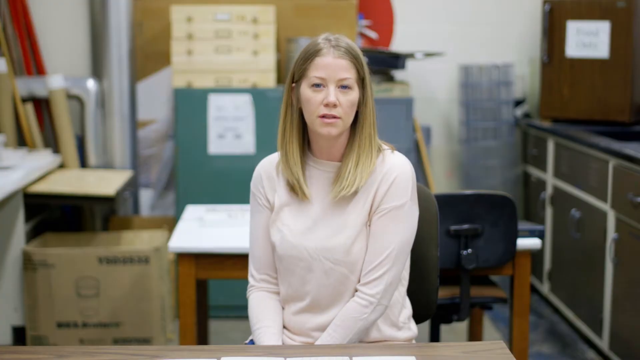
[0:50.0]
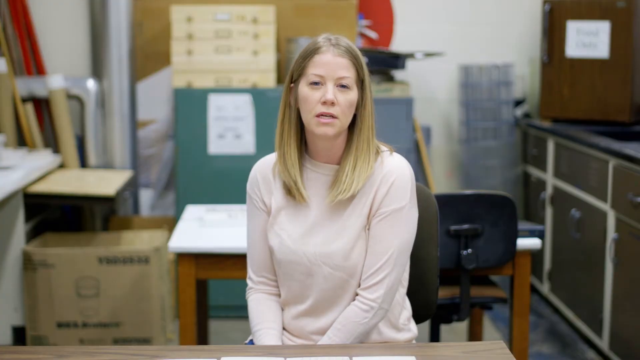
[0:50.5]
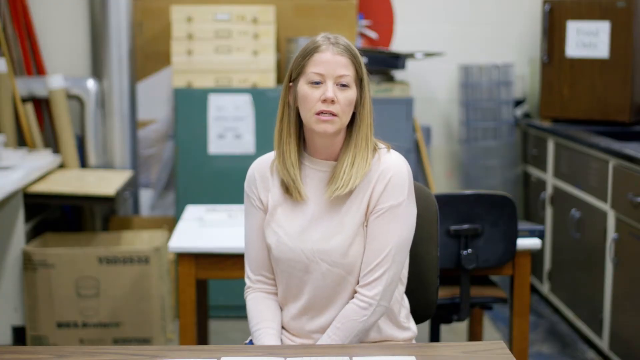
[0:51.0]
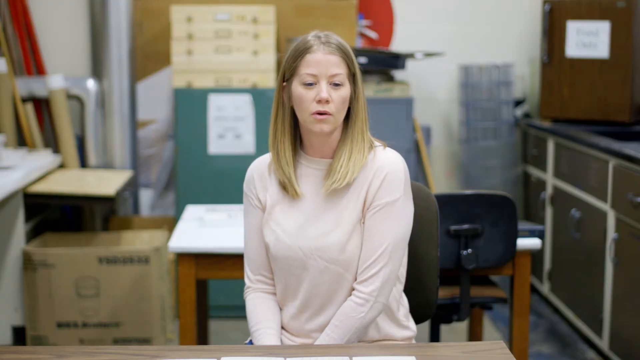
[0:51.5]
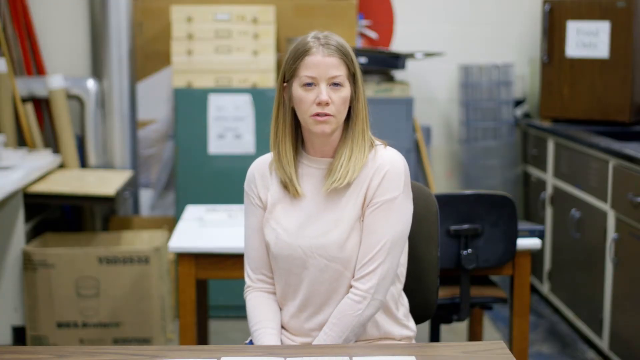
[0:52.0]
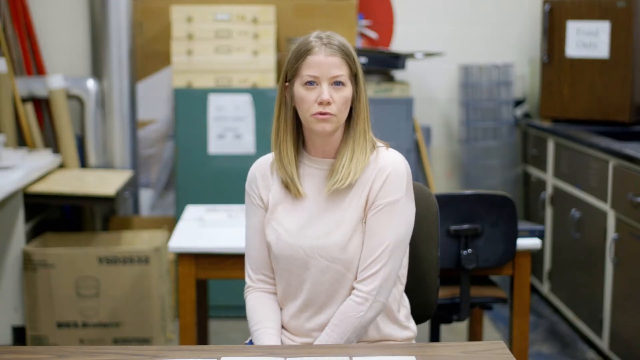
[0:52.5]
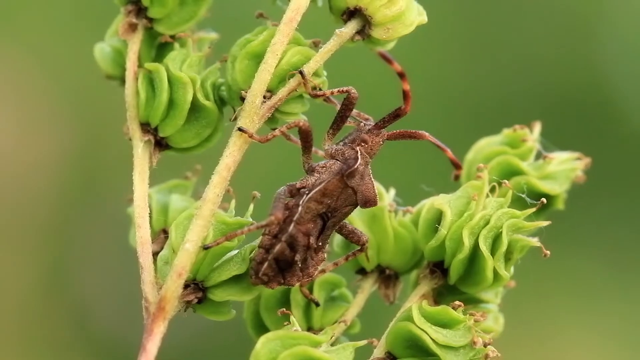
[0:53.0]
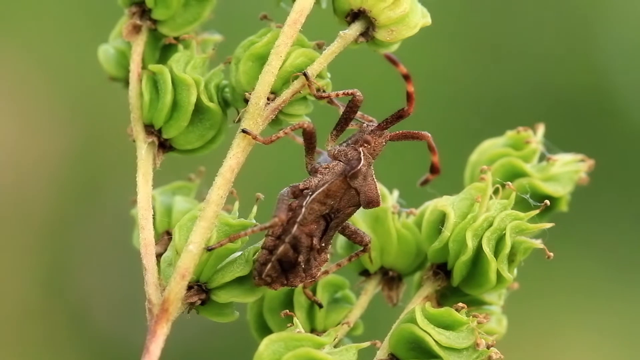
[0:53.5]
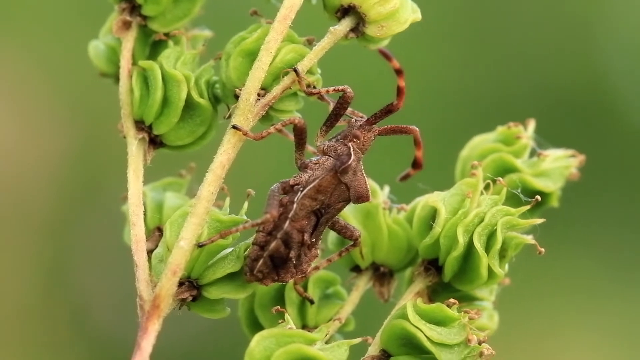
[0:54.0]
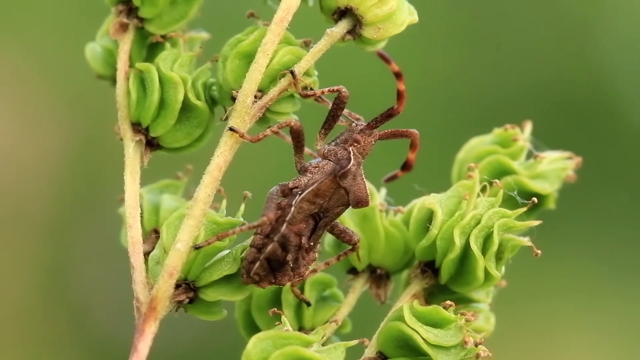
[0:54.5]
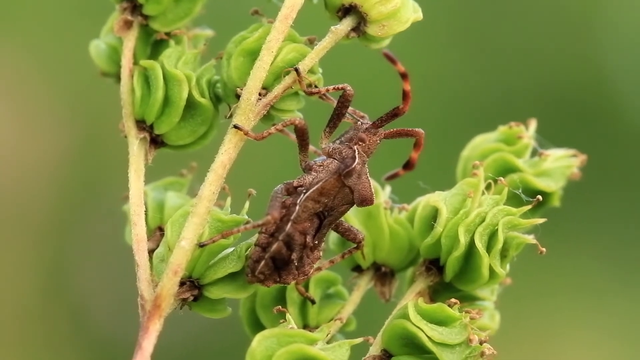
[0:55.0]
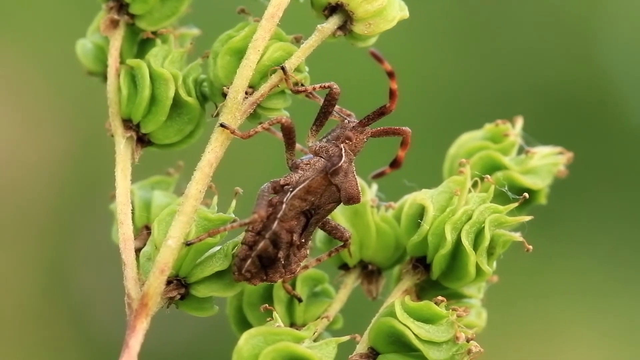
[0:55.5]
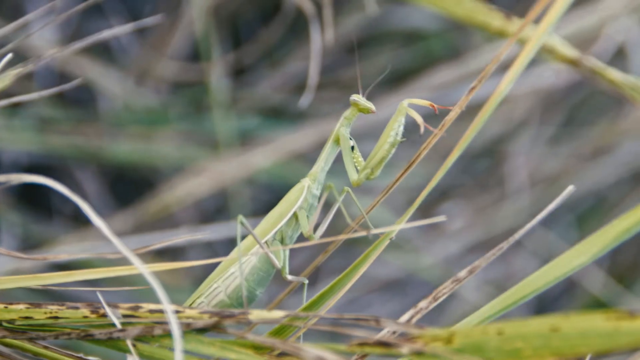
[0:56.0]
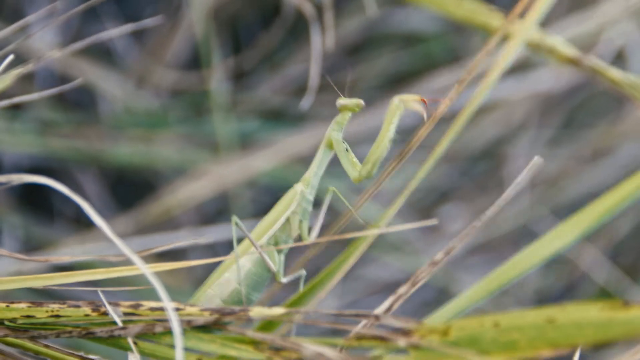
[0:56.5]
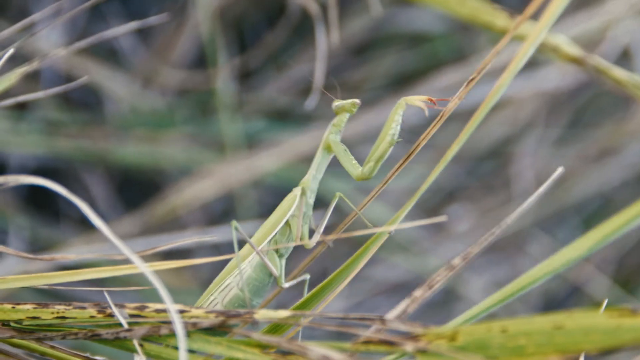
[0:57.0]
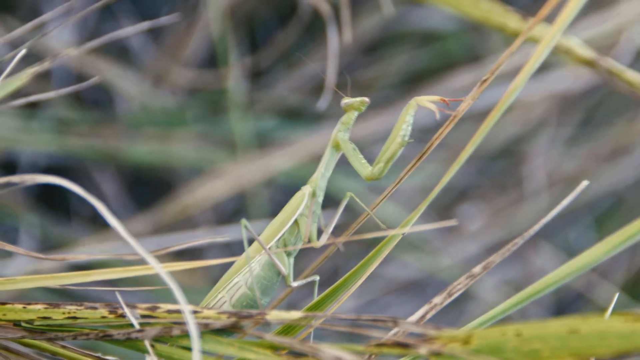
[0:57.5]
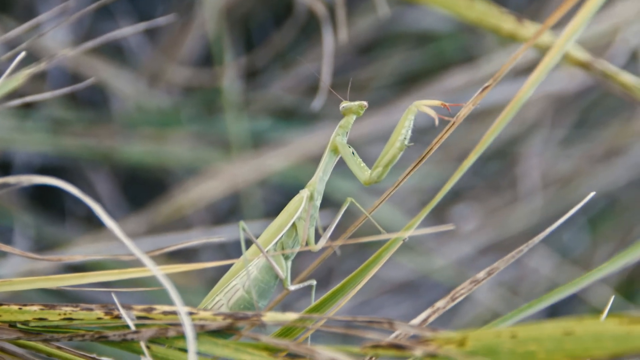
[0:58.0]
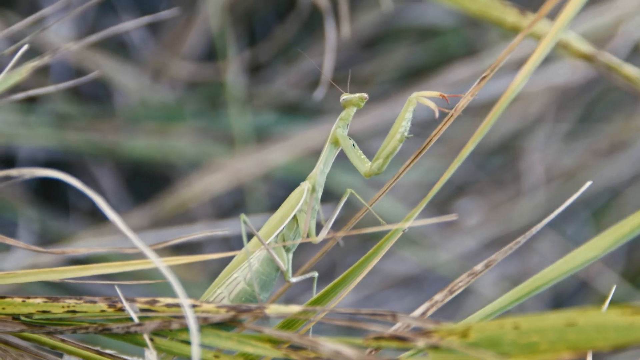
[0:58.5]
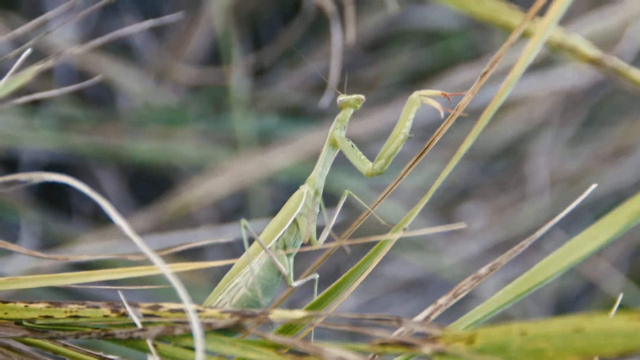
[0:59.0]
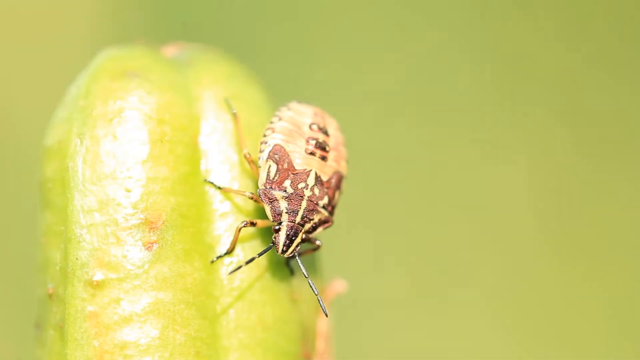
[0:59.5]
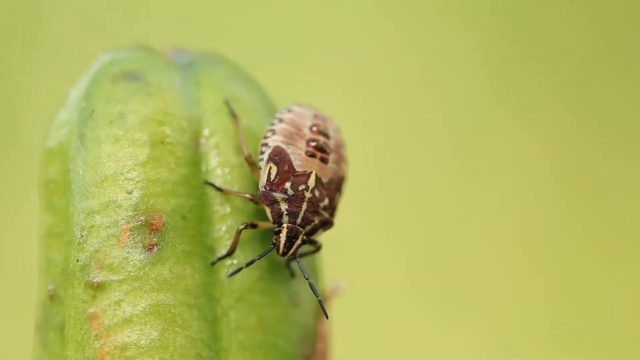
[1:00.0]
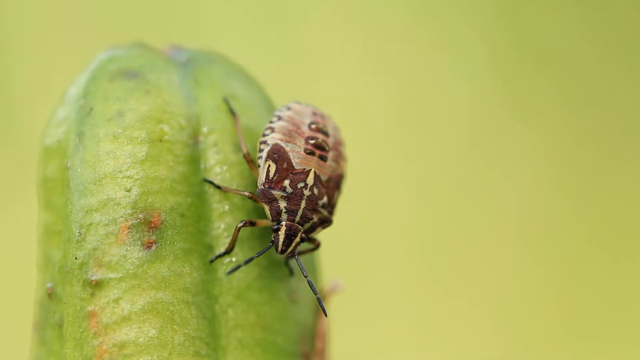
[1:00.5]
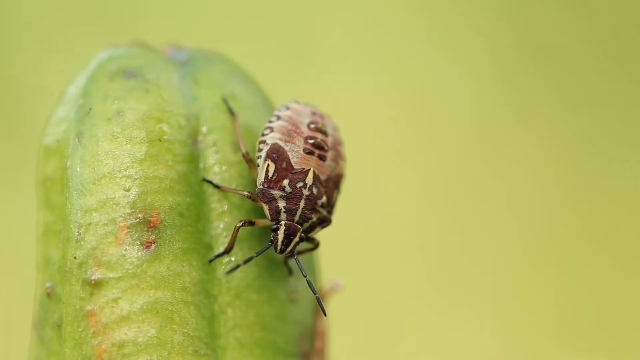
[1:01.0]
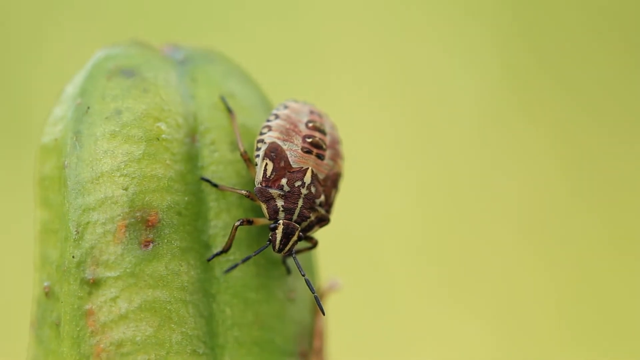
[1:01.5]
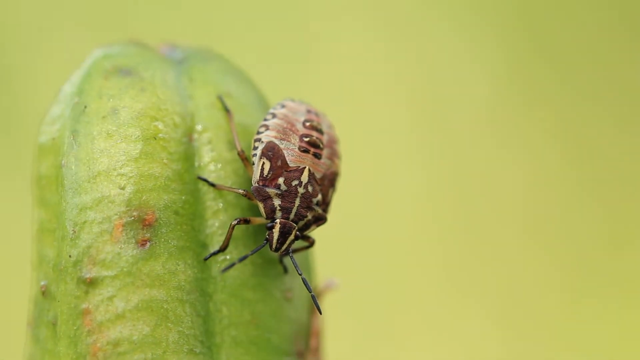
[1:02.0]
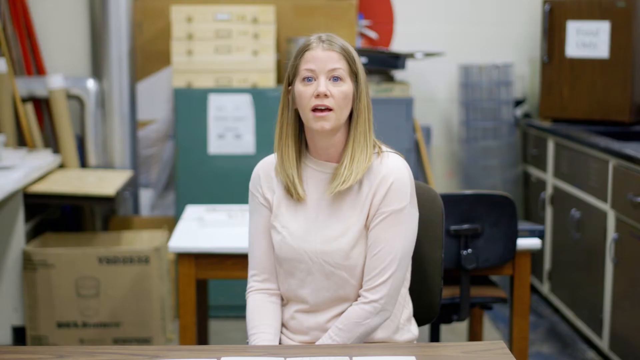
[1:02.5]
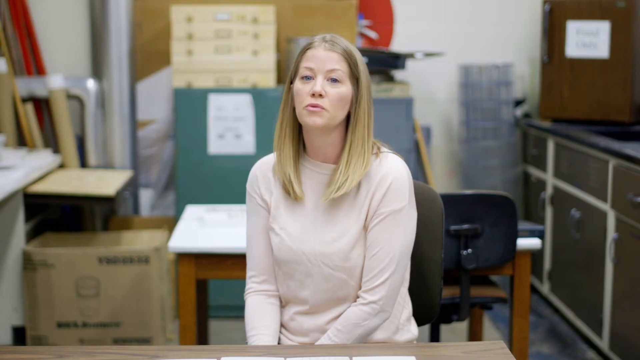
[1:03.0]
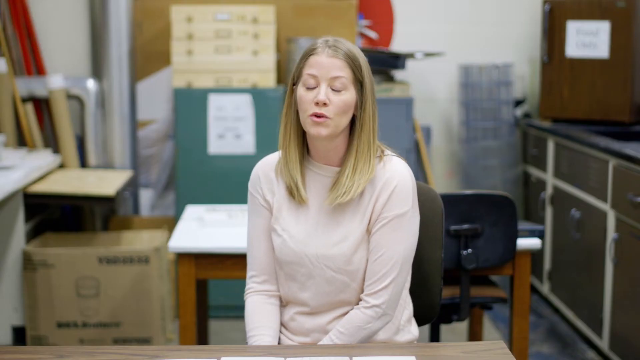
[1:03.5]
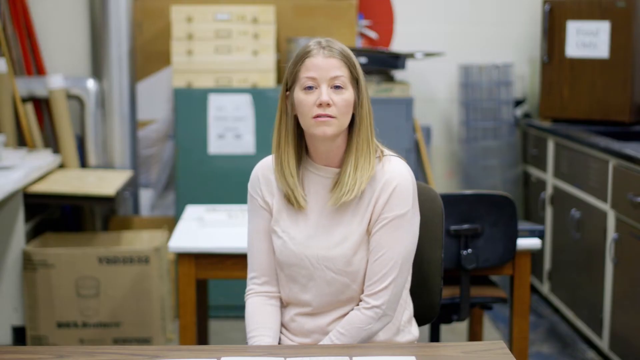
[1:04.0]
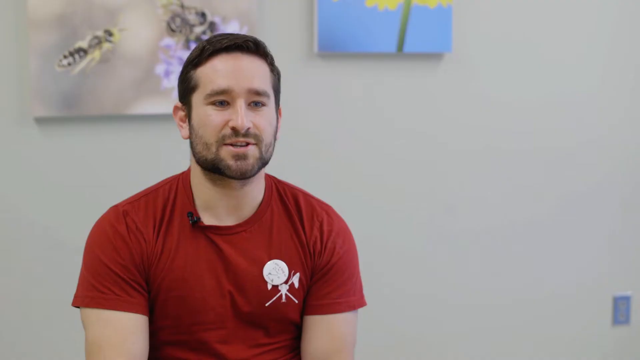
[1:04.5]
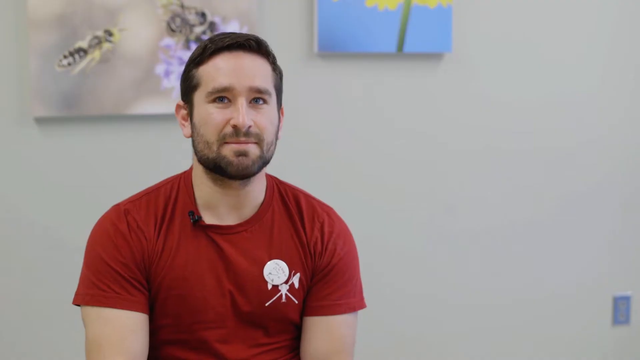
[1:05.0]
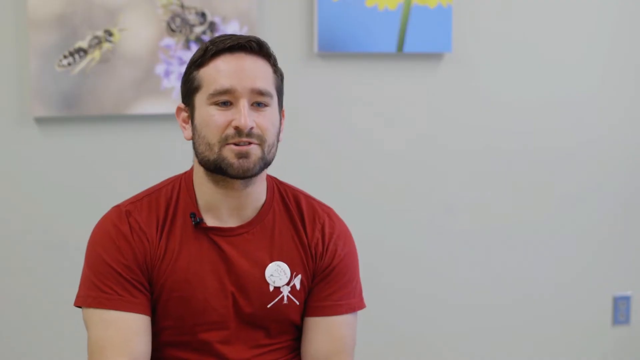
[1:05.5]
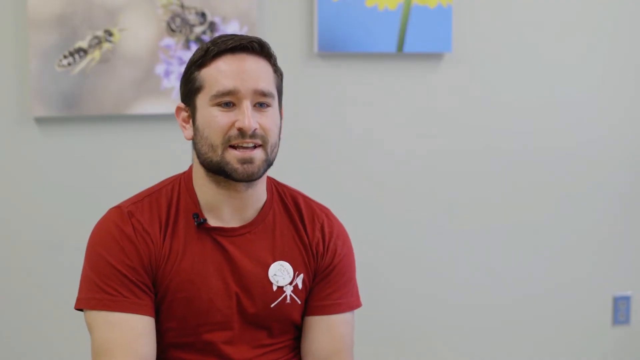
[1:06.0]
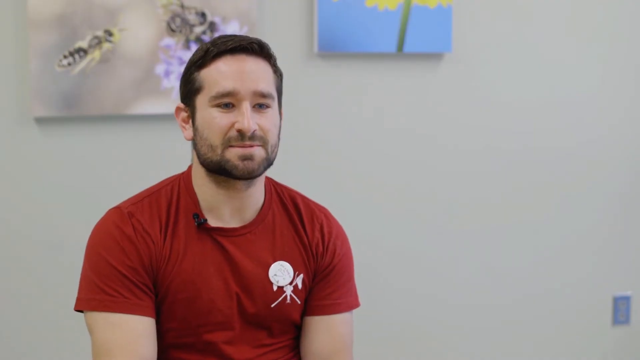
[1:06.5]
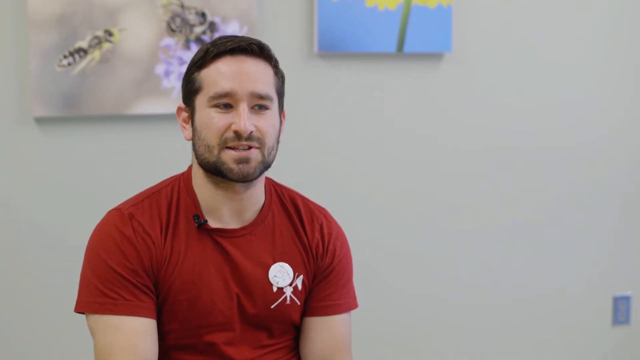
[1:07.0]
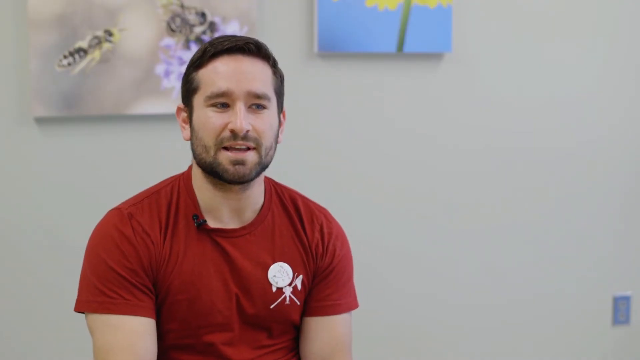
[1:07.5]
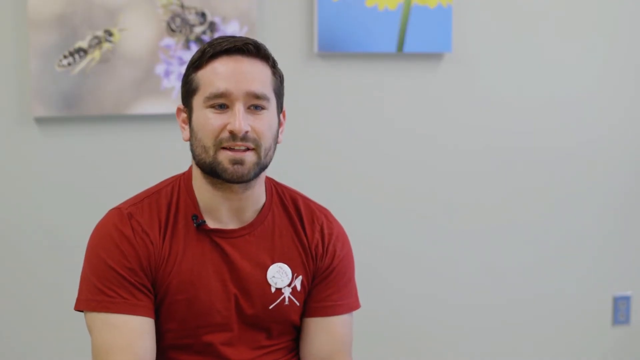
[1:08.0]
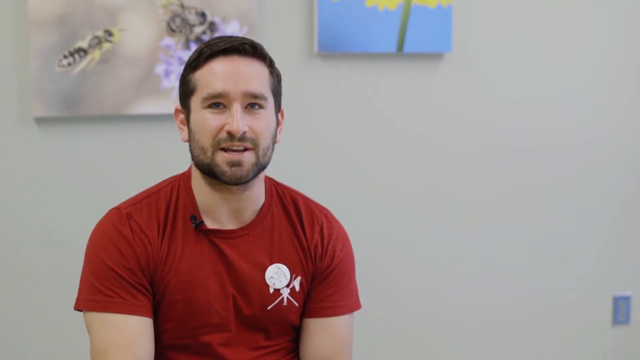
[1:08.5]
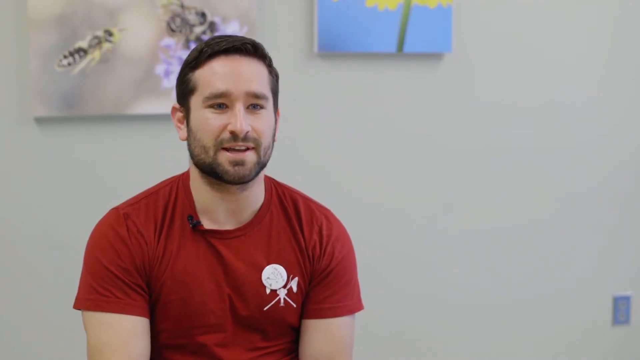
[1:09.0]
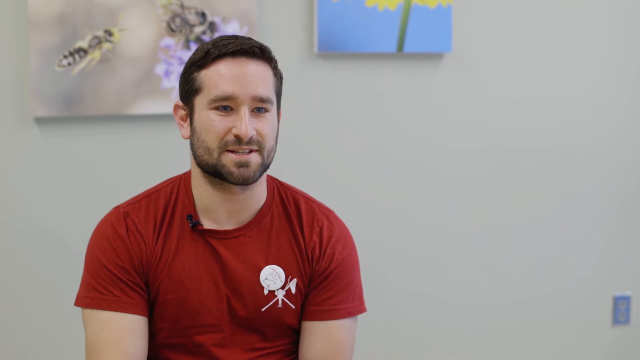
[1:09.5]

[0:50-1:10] A woman with long, blonde, straight hair wearing a light-colored shirt sits on a chair in a very cluttered, disorganized room with different objects, looking at the camera and talking. The video transitions to a large insect on some branches of either a plant or some flowers. A praying mantis then stands on some leaves, and a very large beetle sits on top of what looks to be a cucumber. The woman is seen again talking, sitting on a chair. Next, a man wearing a red t-shirt talks, with art pieces on the wall behind him of a bee going to a flower and of a yellow flower. Then a video shows ants crawling on a tree, going over large white piles of something attached to the tree.